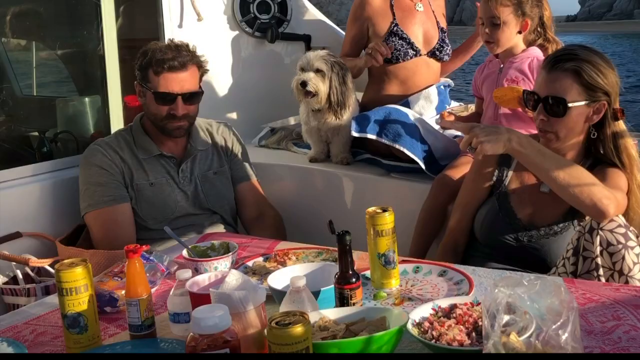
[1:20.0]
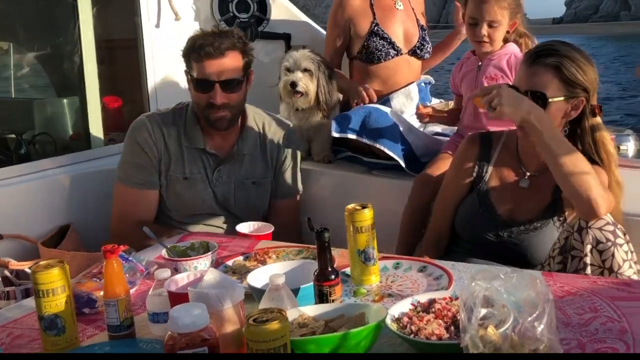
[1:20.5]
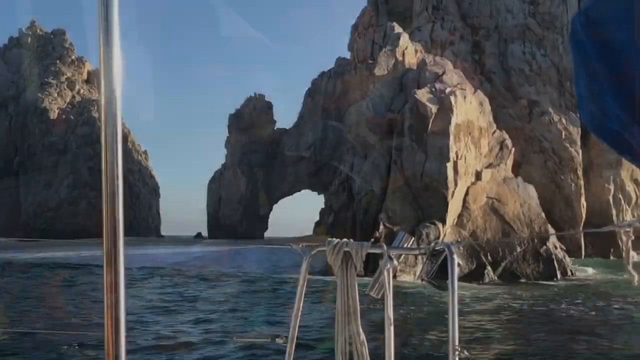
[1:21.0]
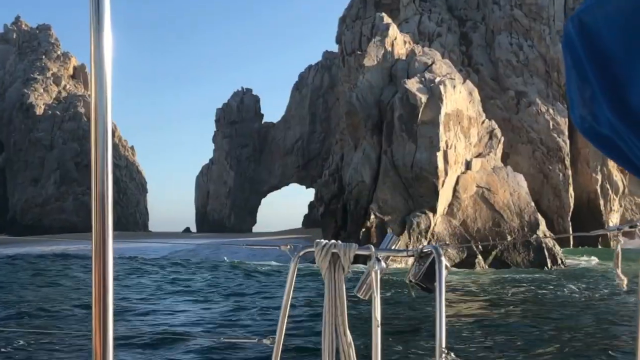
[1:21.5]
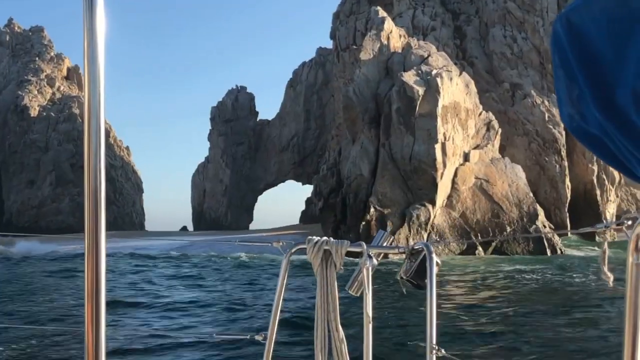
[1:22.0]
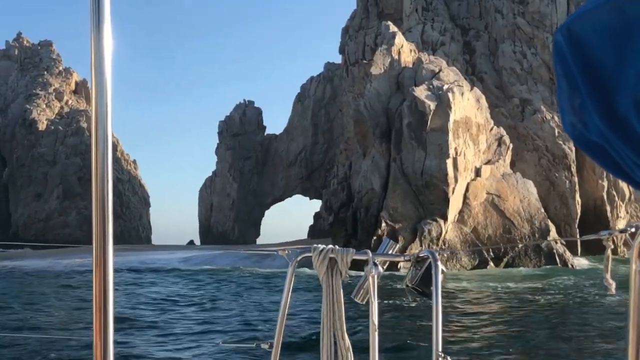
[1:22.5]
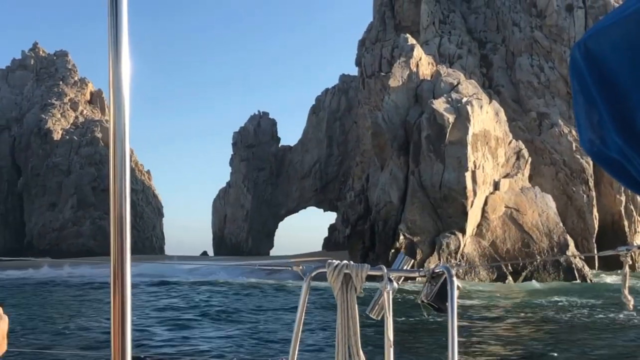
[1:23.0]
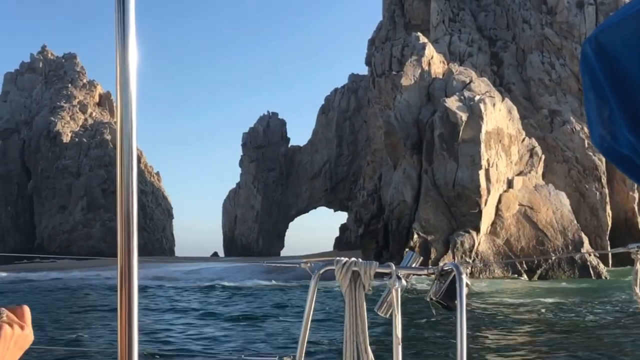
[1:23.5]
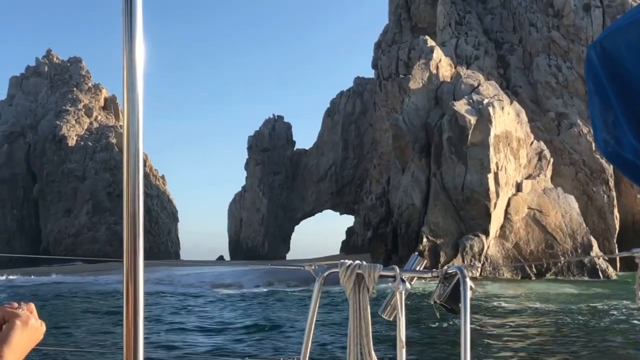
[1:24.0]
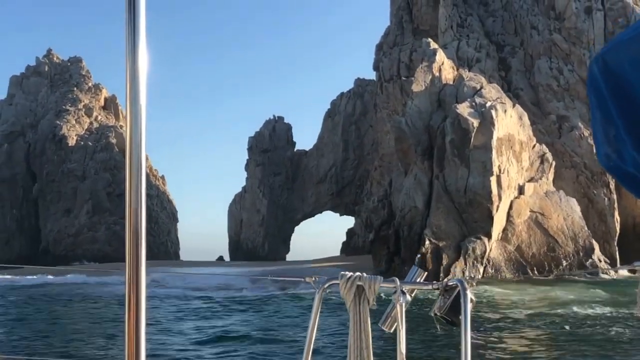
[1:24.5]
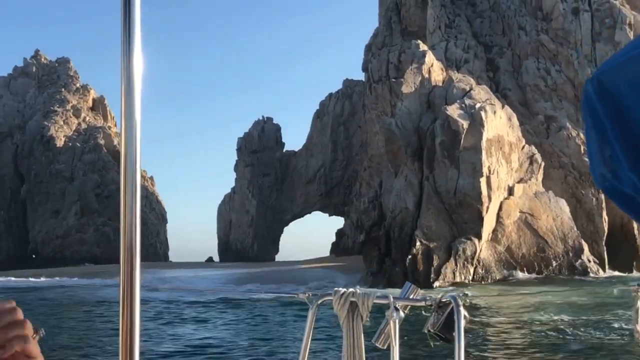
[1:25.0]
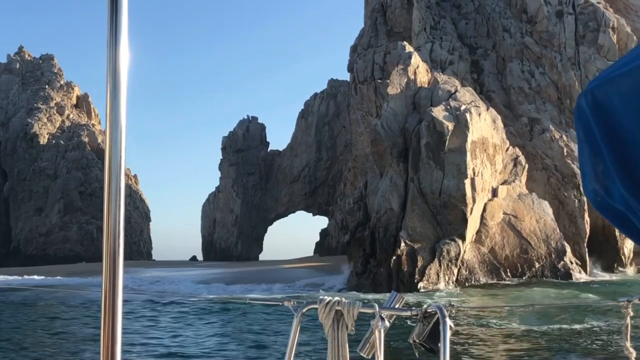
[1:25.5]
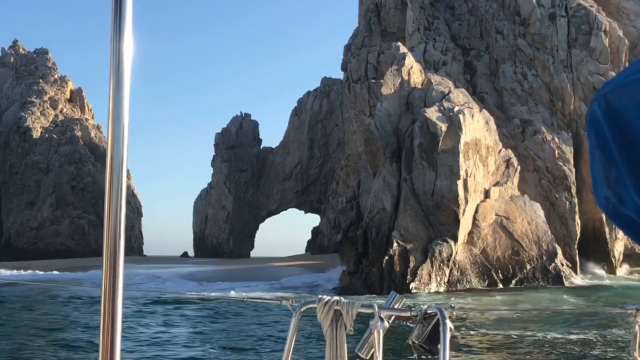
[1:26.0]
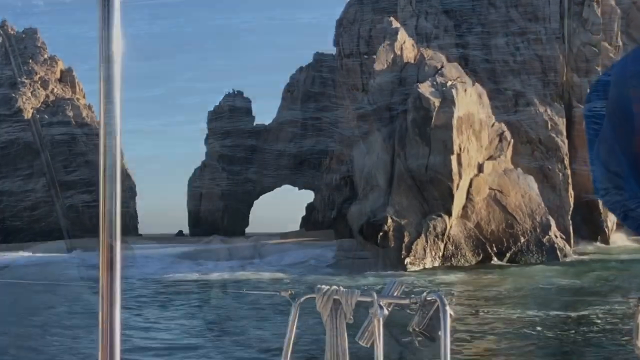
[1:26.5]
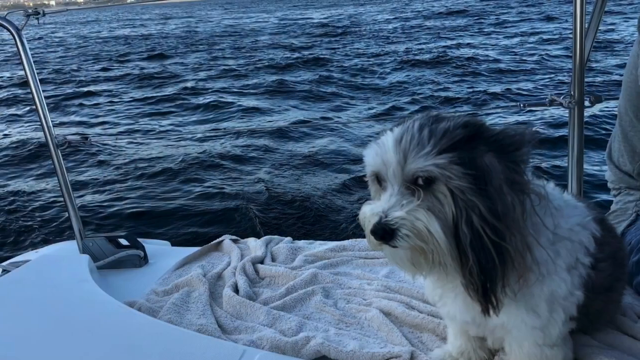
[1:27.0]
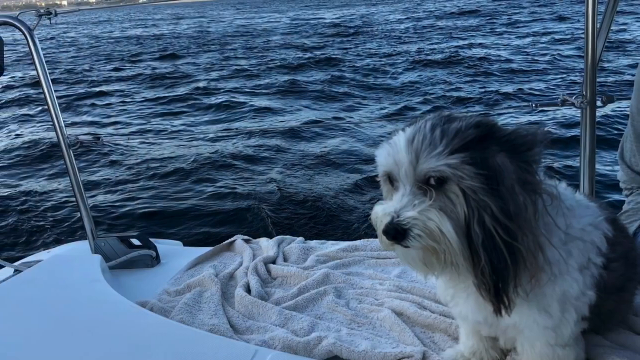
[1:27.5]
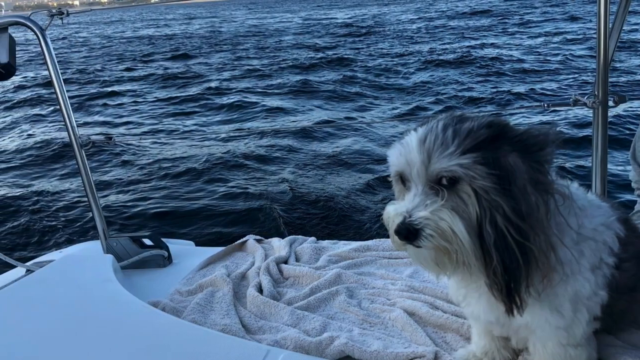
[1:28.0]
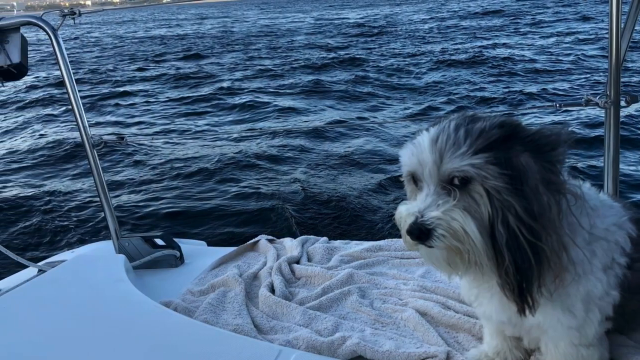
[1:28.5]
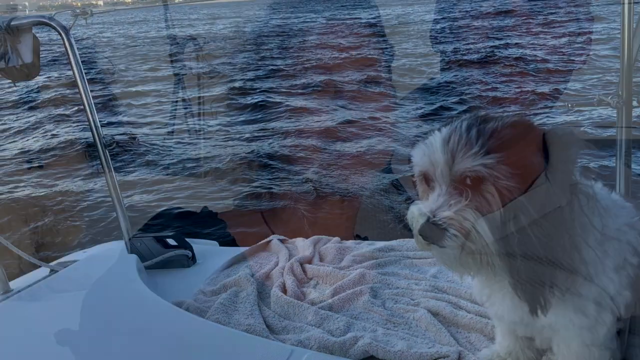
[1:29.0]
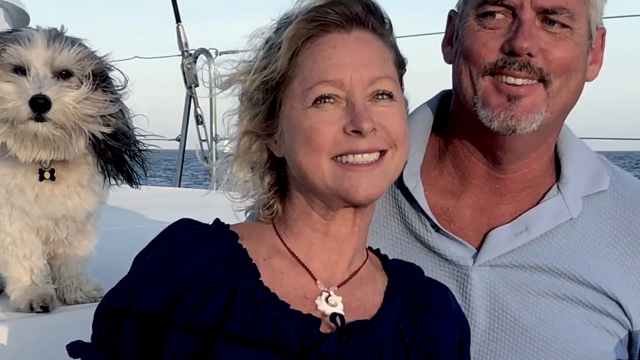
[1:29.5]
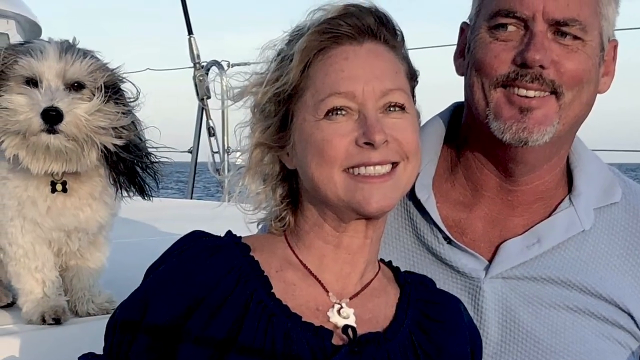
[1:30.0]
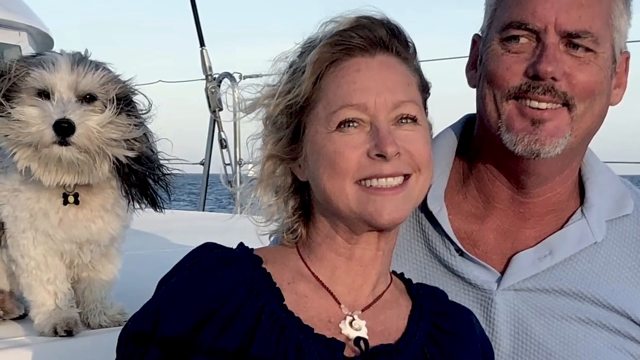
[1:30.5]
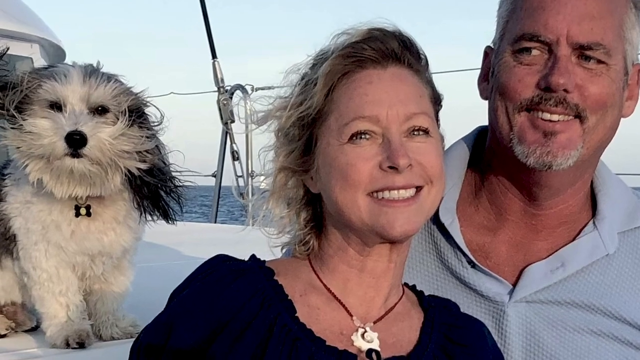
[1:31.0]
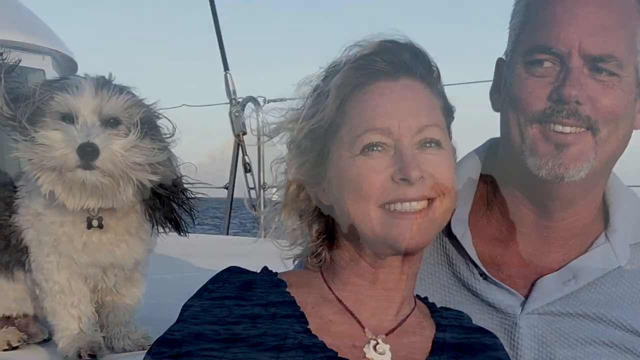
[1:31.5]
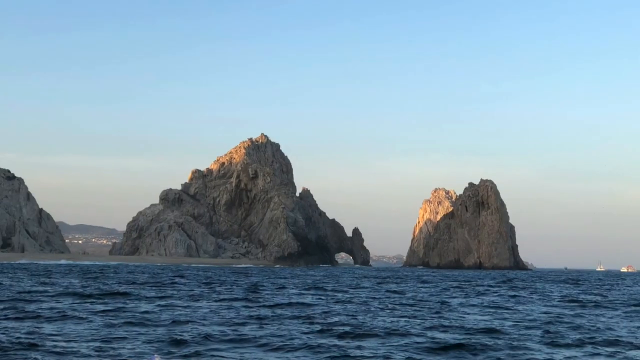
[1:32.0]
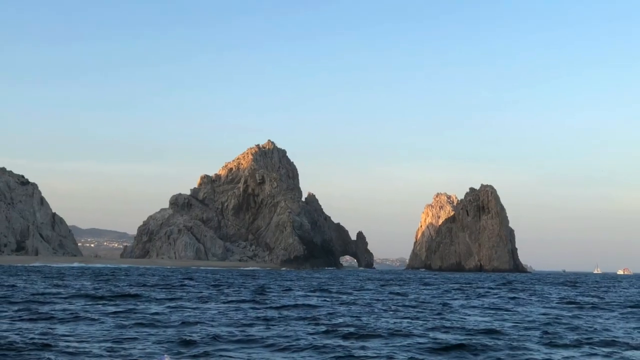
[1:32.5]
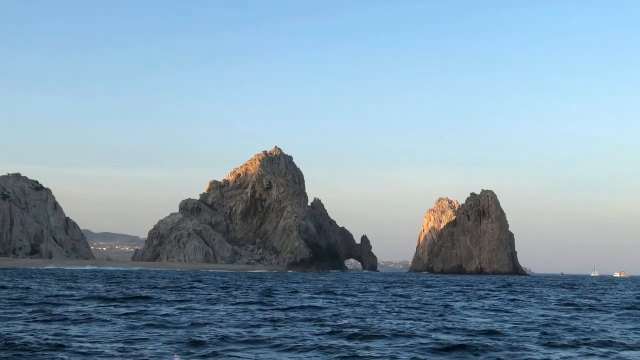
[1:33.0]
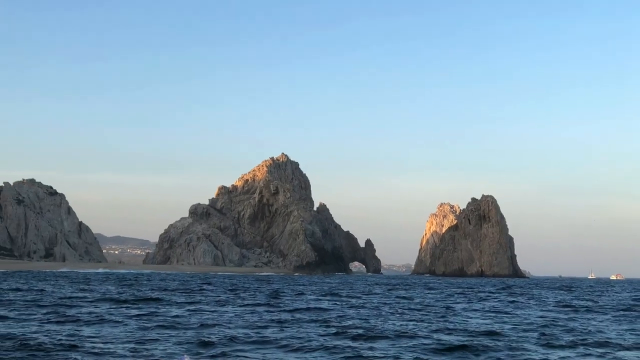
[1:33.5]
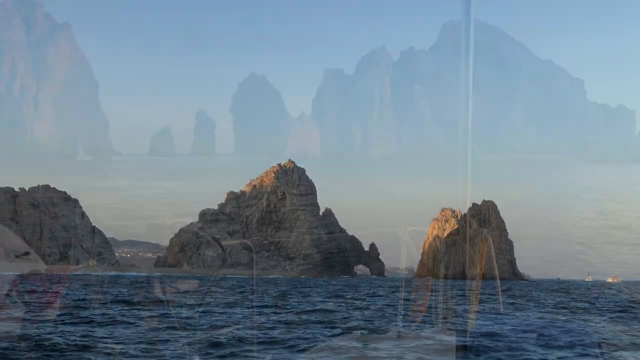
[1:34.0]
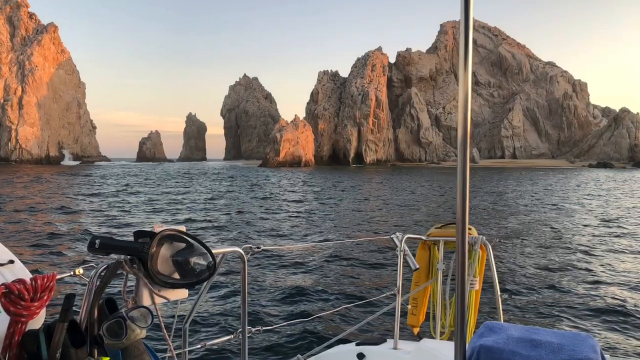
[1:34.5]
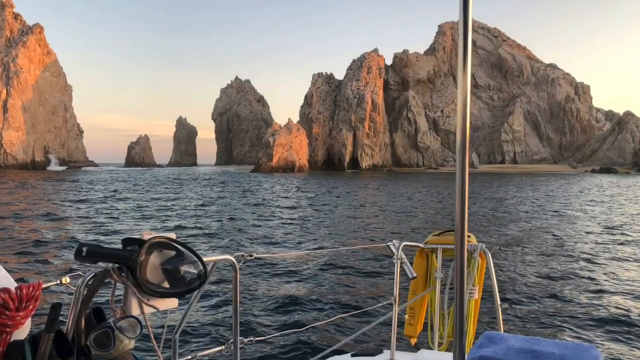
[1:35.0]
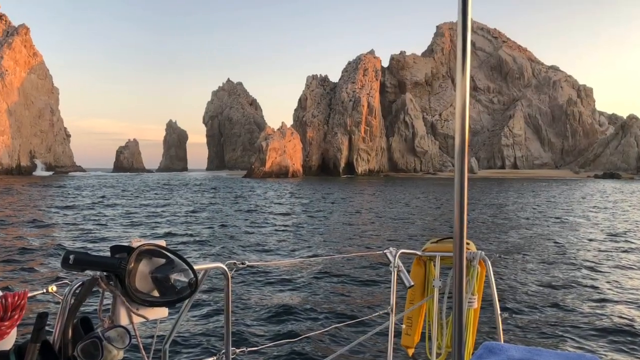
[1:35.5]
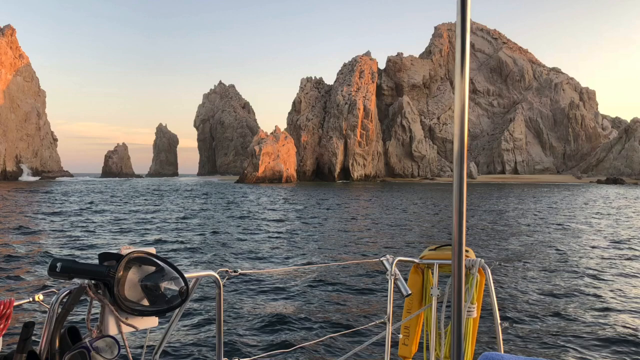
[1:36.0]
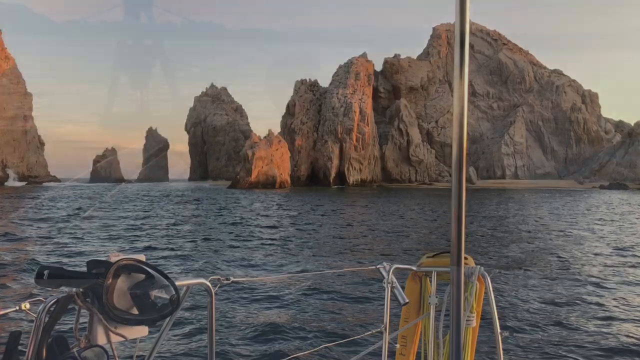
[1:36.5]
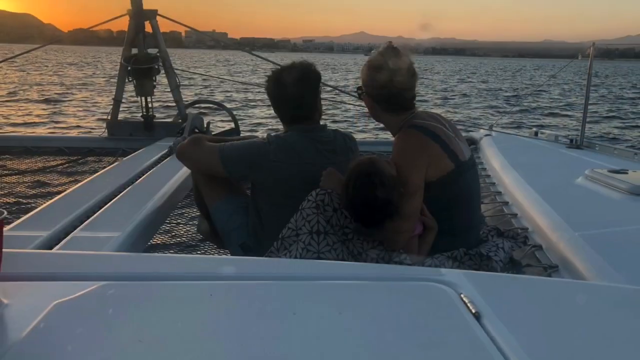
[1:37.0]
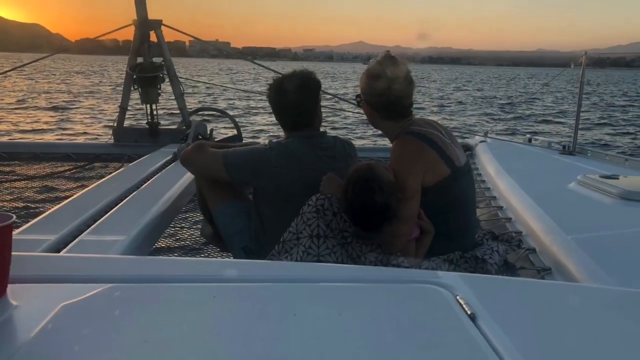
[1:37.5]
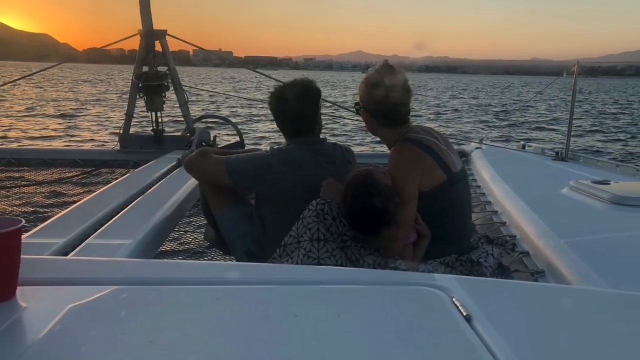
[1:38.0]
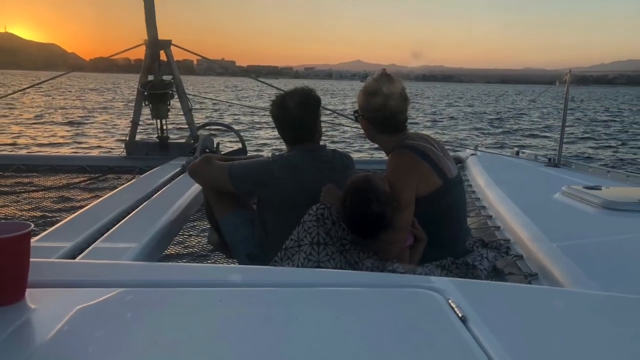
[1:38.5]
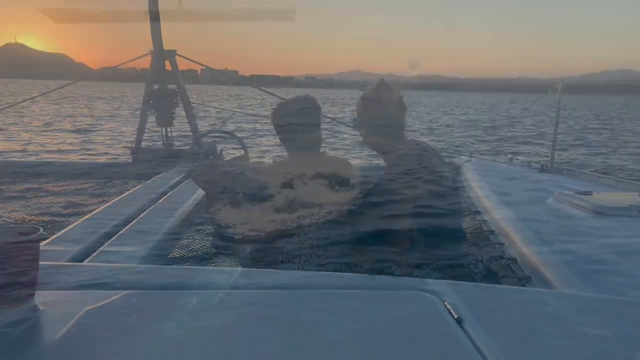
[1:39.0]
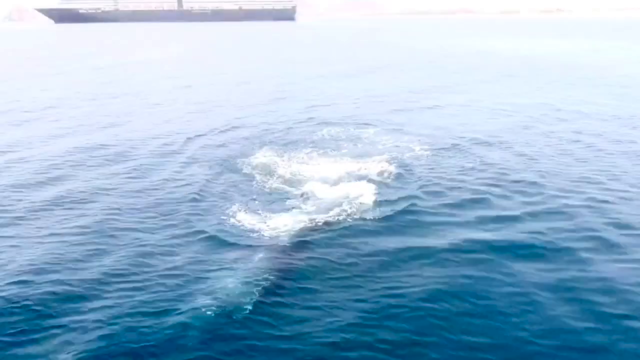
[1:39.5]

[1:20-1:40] Filmed from a boat that slowly rocks back and forth, the view shows water with large rocks and mountains protruding from it; in a few places, rocks form tunnels coming off the bigger rocks. The video cuts to a picture of a dog on a boat: the white front of the boat is visible with water in the background, and in the bottom right-hand corner is a hairy dog with long black, light gray and white hair, side-eyeing the camera. Another still picture follows. On the right side is a man with gray hair wearing a blue shirt with a blue collar, the top two buttons unbuttoned. In front of him, to his right, is a woman with blonde hair wearing a black top and a necklace with a butterfly on it. To the right of both is a white dog with long hair, black ears and a black top of its head. The woman and man are visible from the chest up, with water in the background.